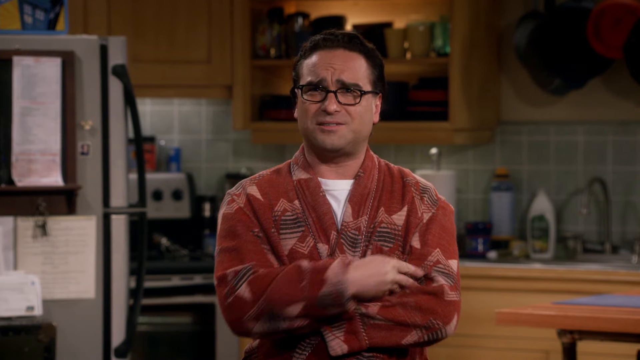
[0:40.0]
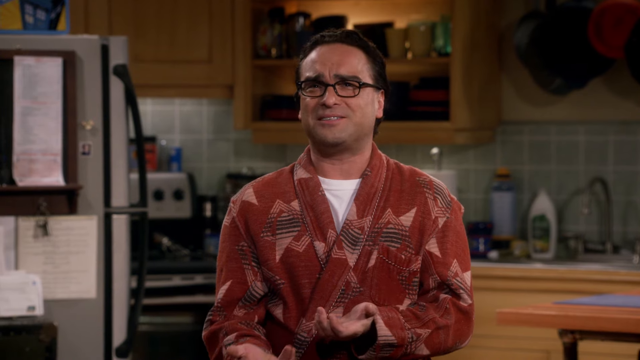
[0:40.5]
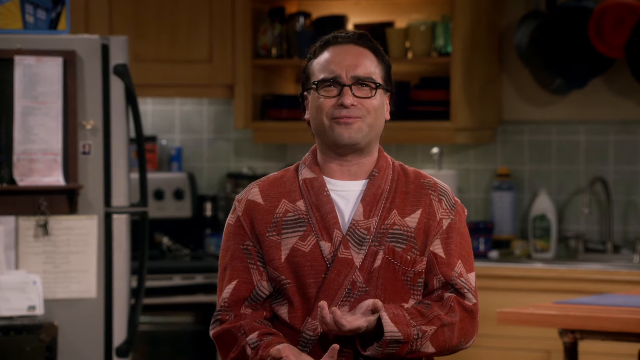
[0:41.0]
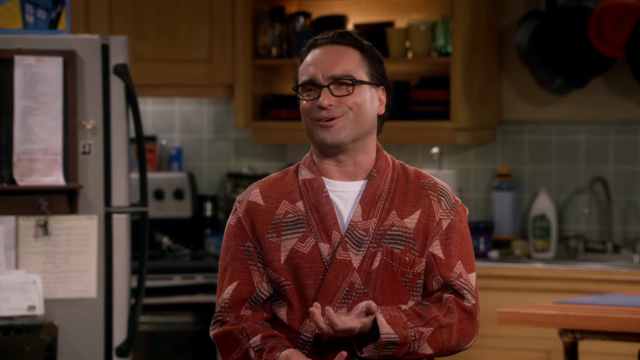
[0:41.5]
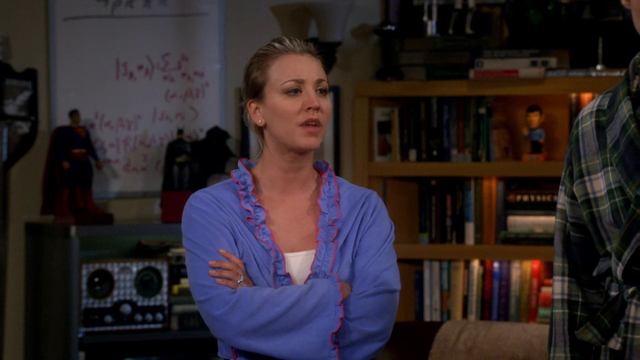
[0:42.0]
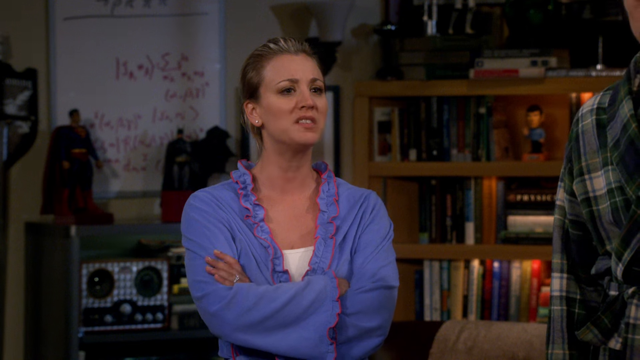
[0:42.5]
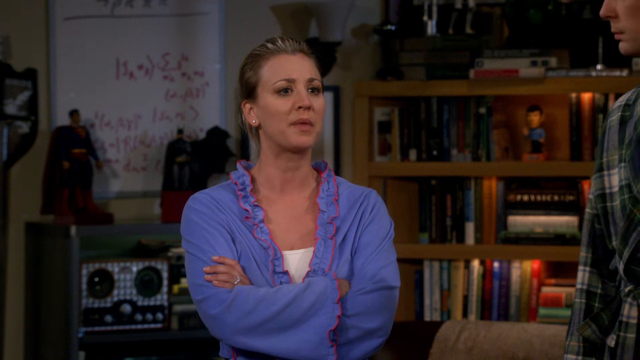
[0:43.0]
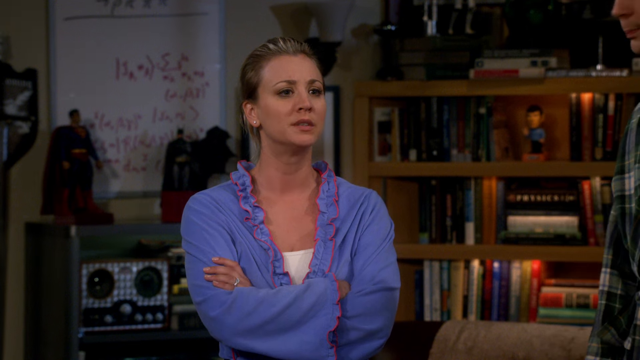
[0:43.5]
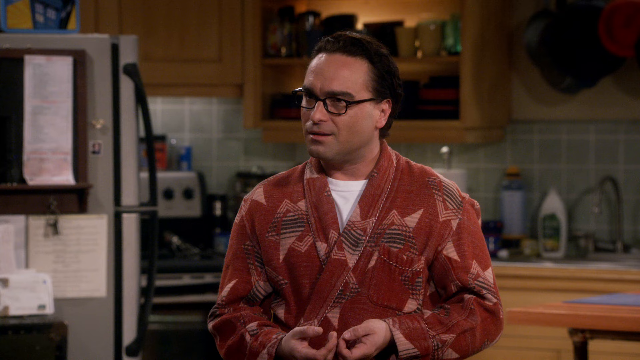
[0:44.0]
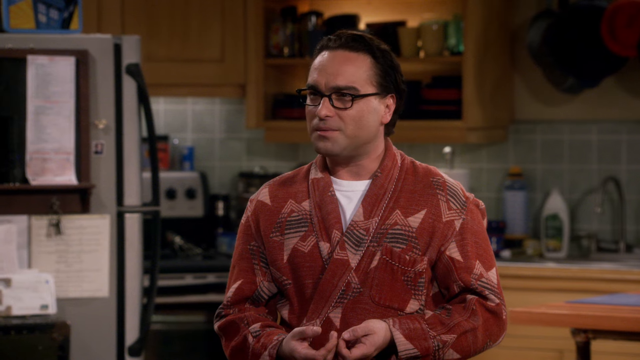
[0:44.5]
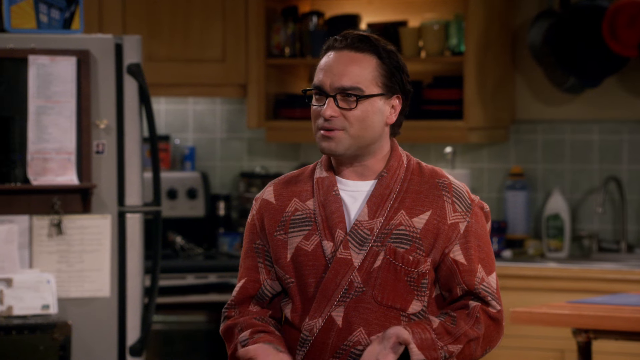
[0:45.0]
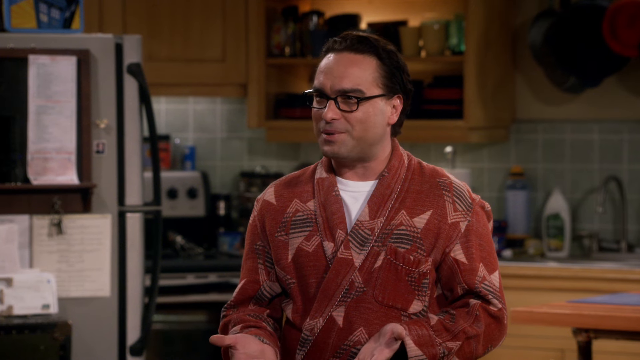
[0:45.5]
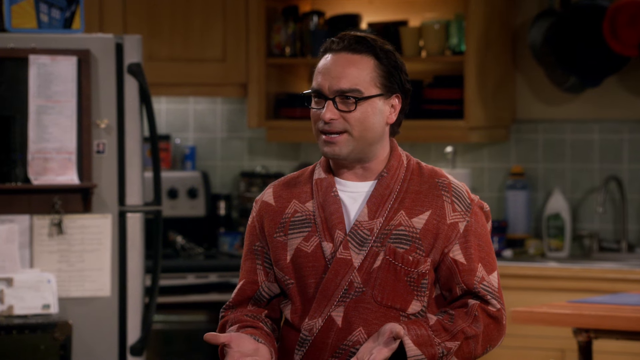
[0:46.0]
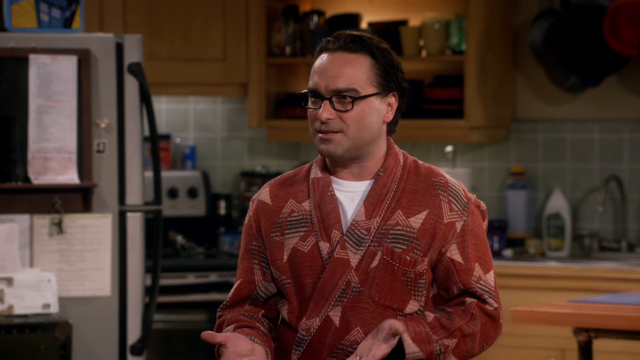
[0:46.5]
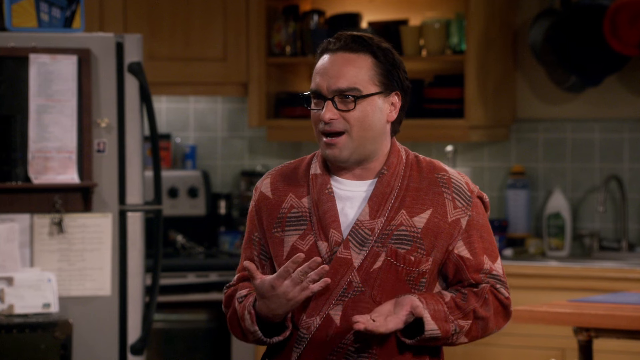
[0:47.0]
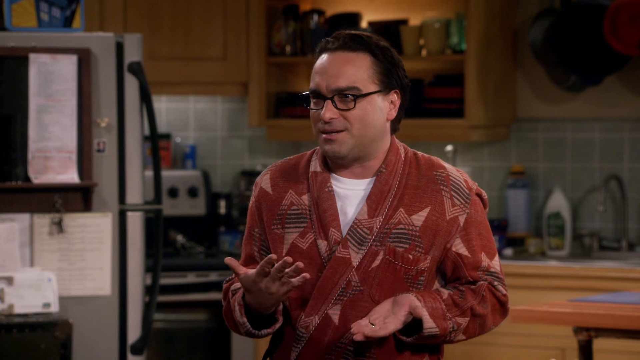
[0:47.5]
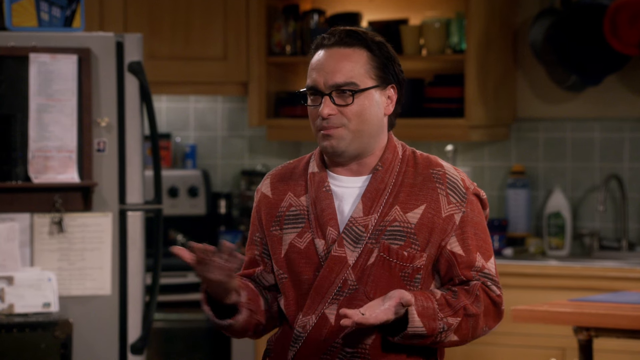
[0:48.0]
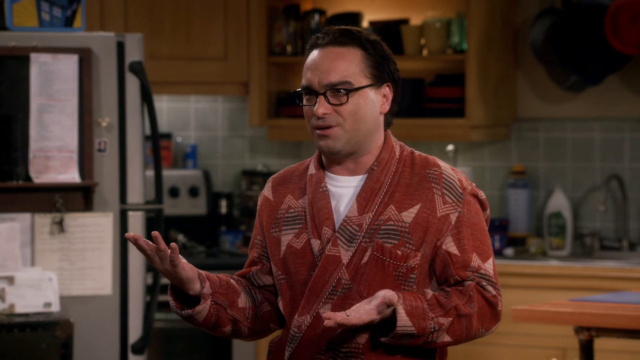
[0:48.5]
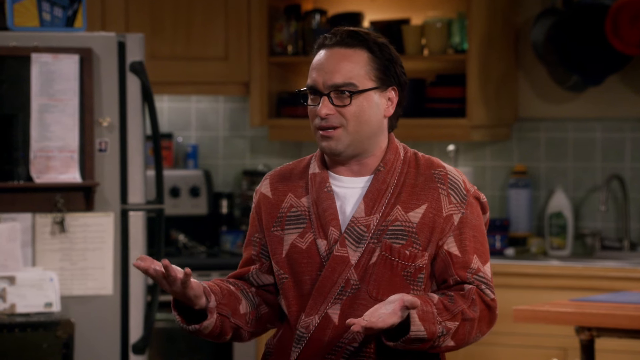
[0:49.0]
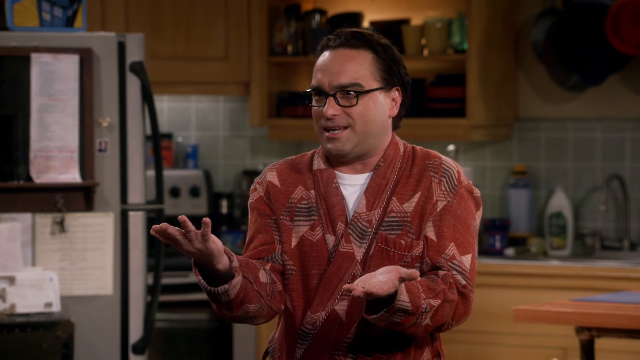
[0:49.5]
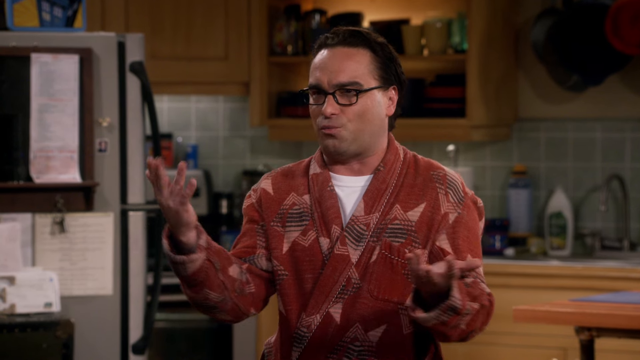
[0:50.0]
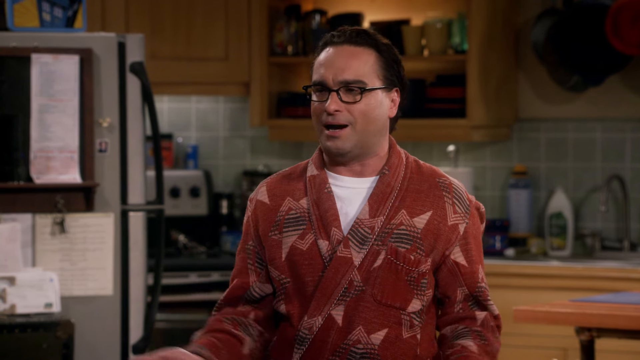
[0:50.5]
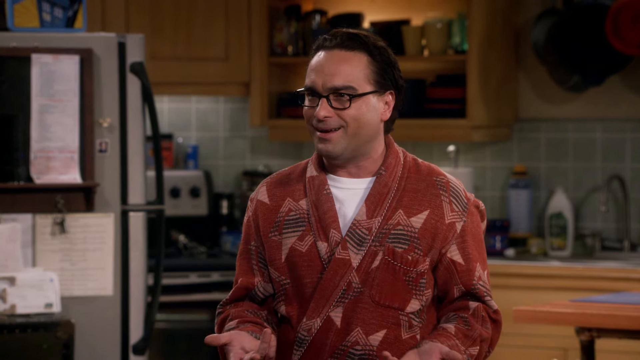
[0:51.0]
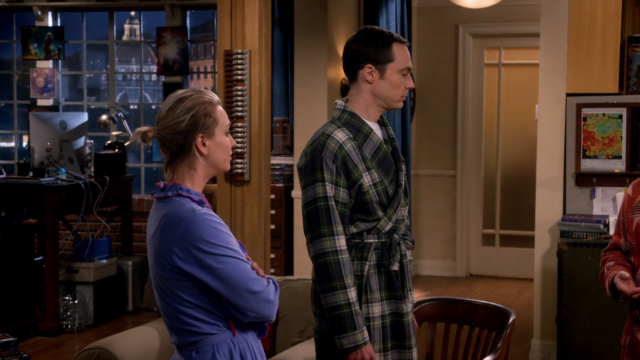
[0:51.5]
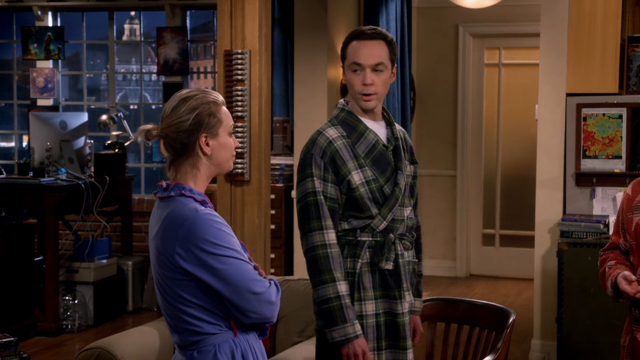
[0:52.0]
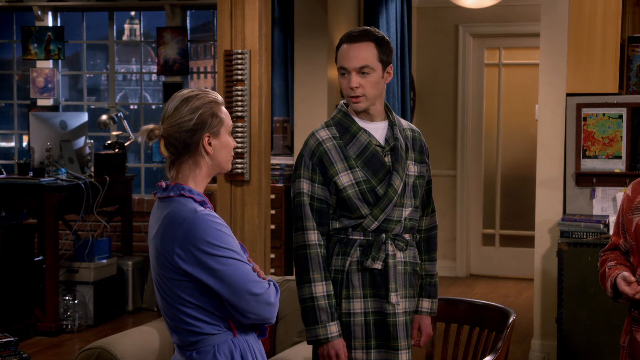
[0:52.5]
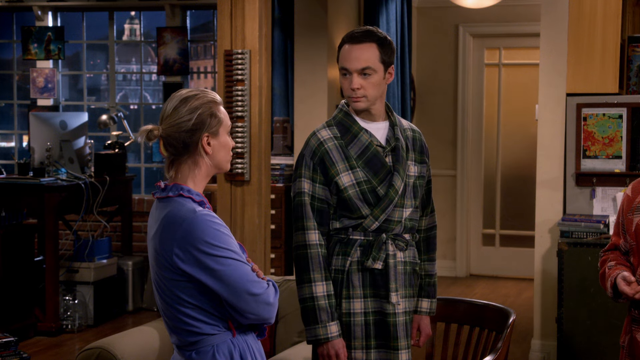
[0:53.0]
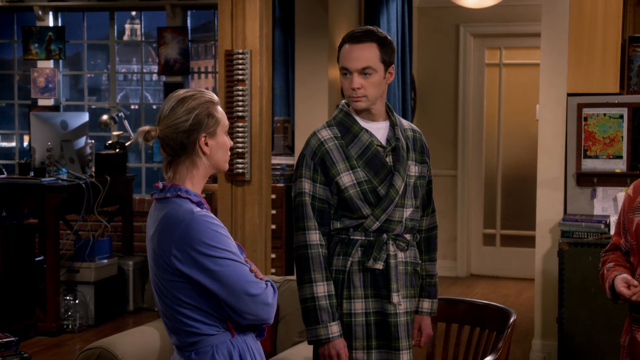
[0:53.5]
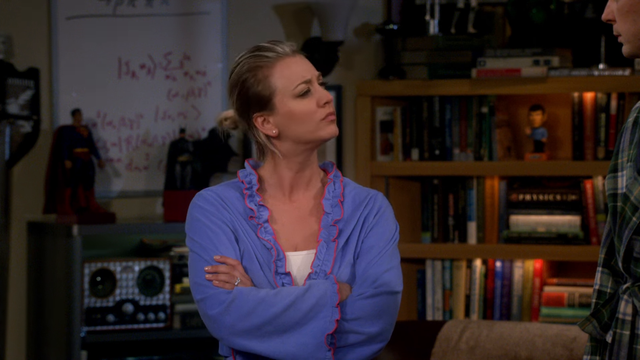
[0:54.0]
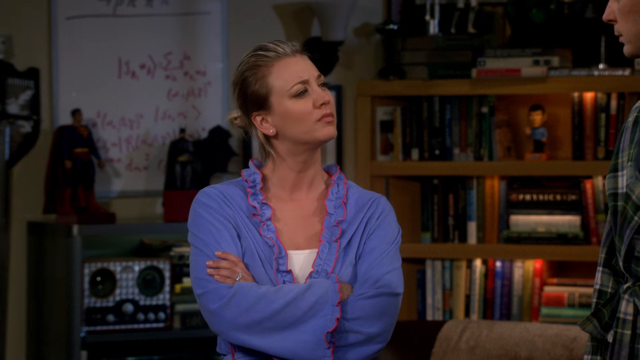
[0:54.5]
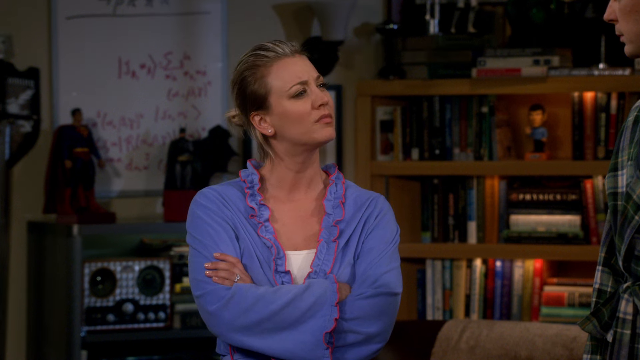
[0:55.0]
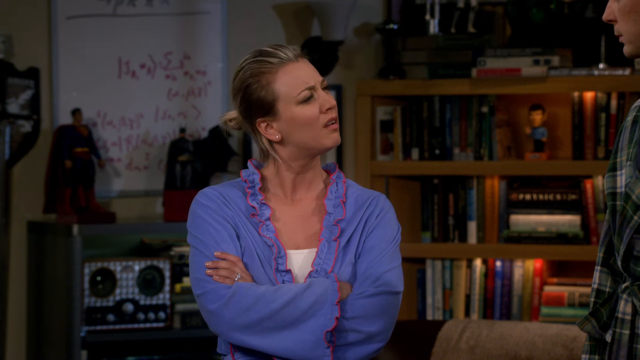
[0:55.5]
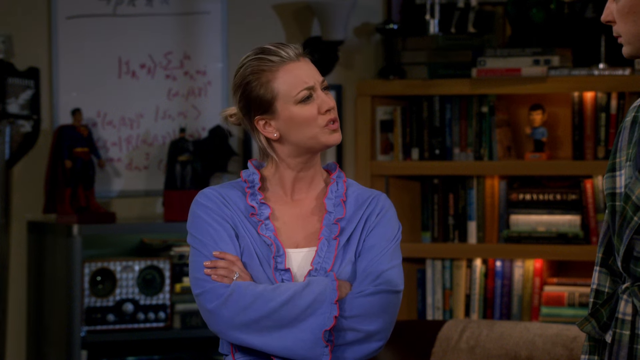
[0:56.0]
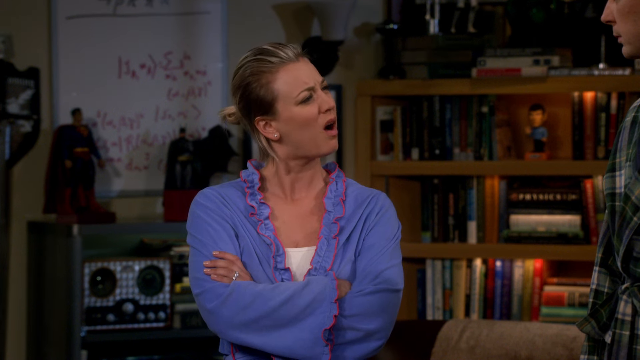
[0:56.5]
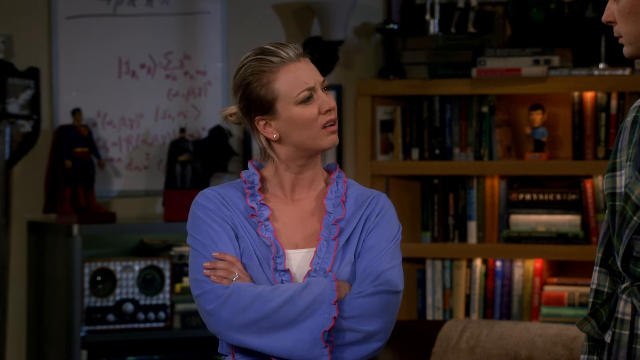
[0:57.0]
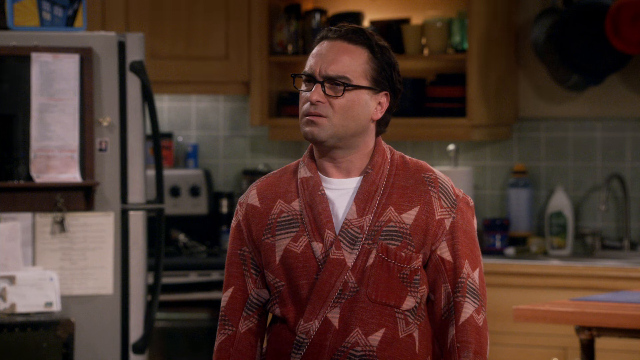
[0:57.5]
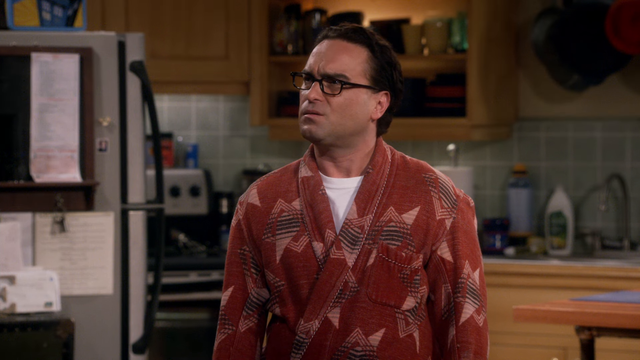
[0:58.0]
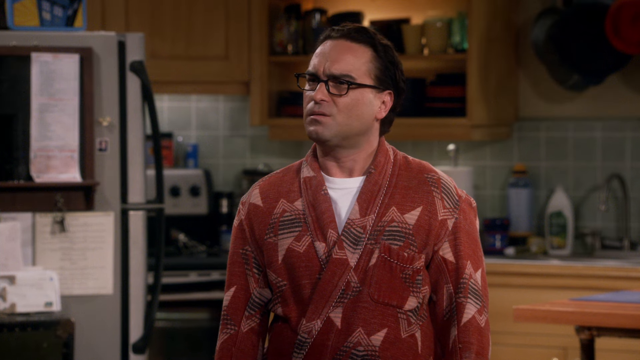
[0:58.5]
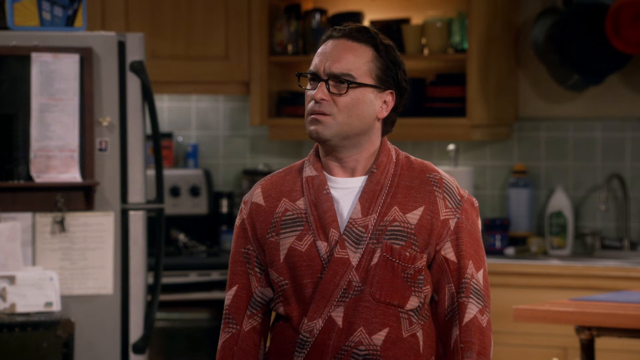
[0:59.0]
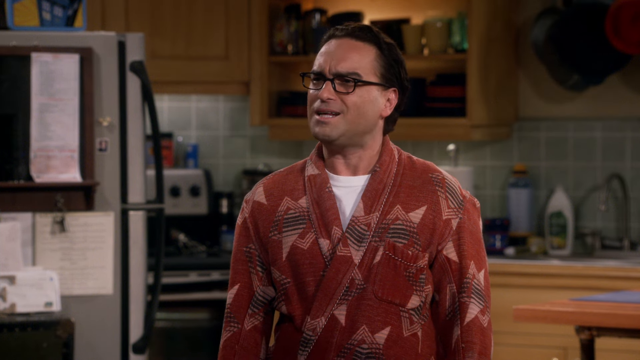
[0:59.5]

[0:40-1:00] The focus is on a man with dark brown hair that is longer on top and tapered on the sides. His forehead is frowned up as if he is upset, and he wears dark brown glasses, a tan or rust-colored robe with a design on it, and a white undershirt. His arms are folded in front of his chest. He then unfolds his arms with his palms facing up, as if pleading his case as he speaks to the woman, and moves his hands a bit up and down and left to right as he keeps talking to the man and the woman. The woman, her arms folded over her chest, looks up at him with a "really?" look and tilts her head up and down as she speaks.